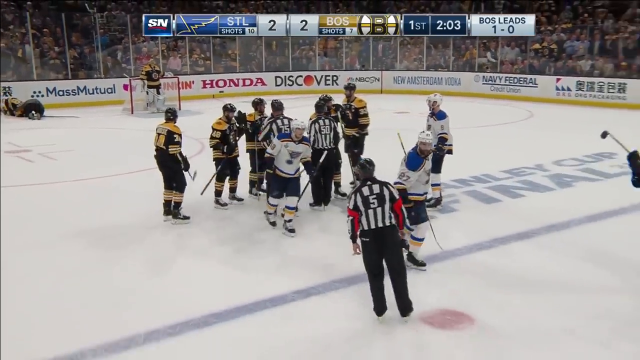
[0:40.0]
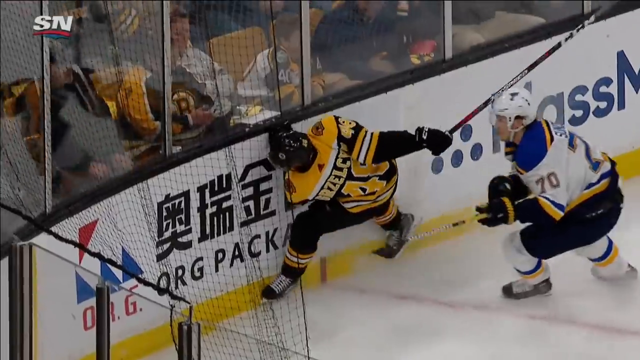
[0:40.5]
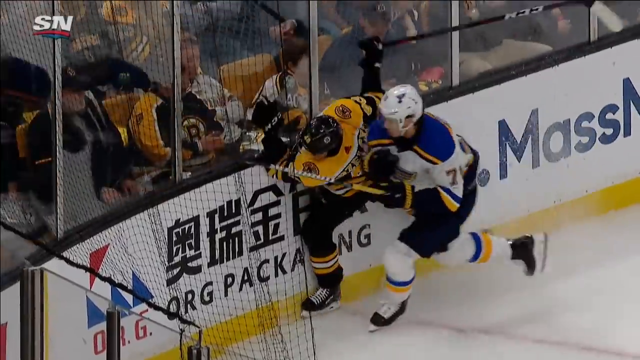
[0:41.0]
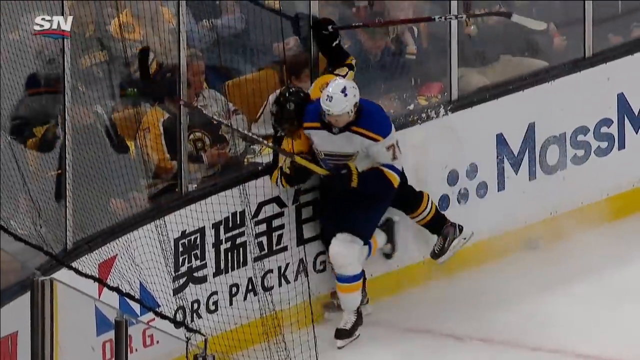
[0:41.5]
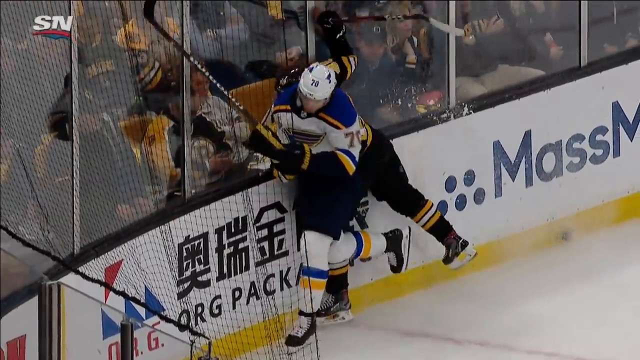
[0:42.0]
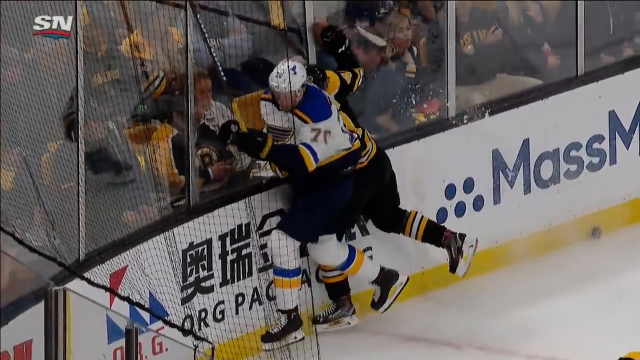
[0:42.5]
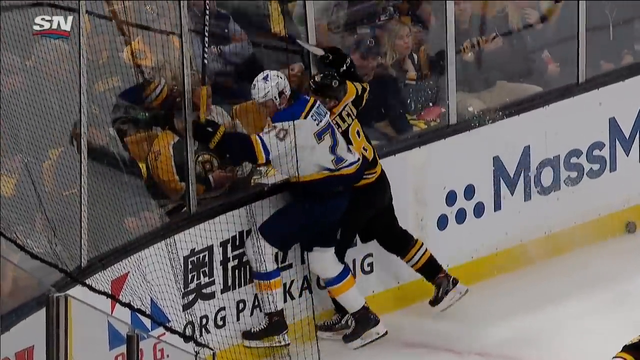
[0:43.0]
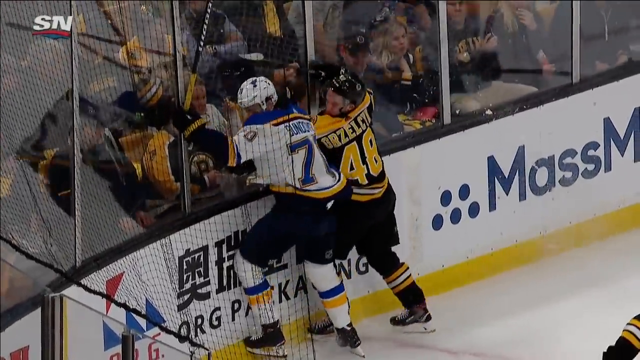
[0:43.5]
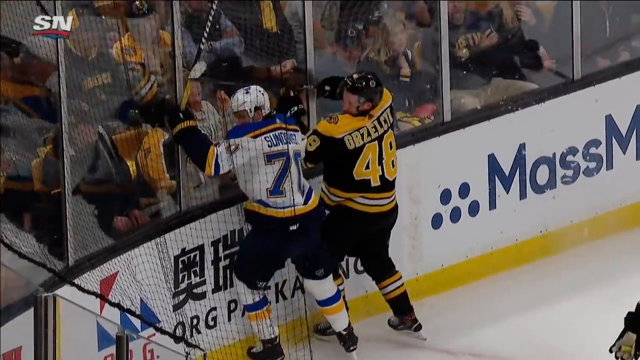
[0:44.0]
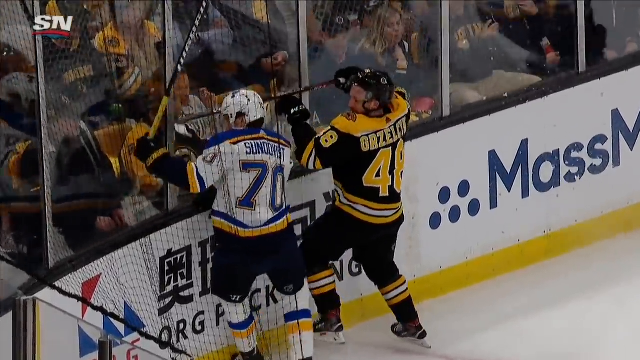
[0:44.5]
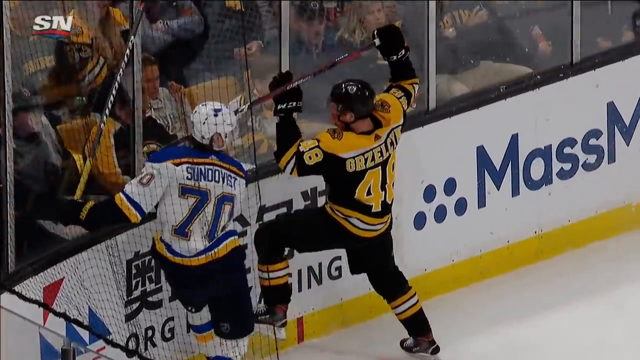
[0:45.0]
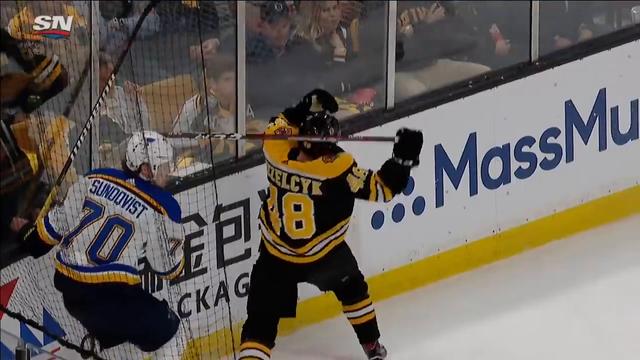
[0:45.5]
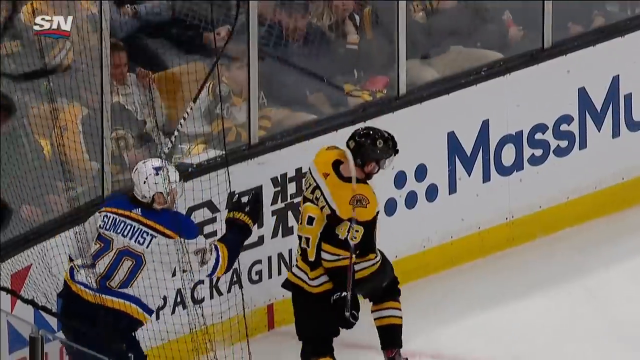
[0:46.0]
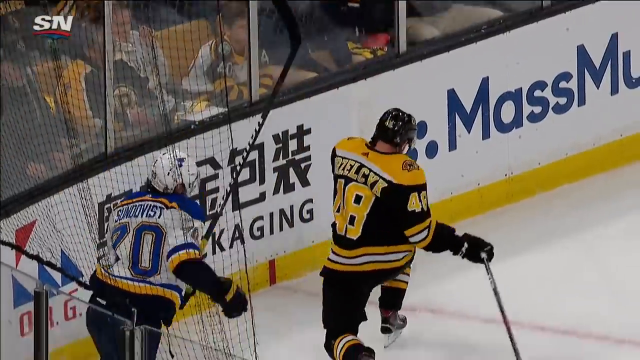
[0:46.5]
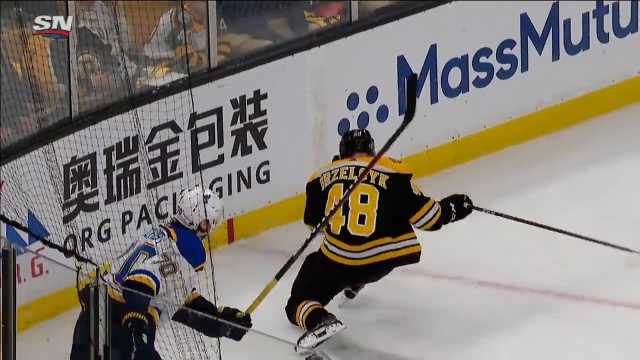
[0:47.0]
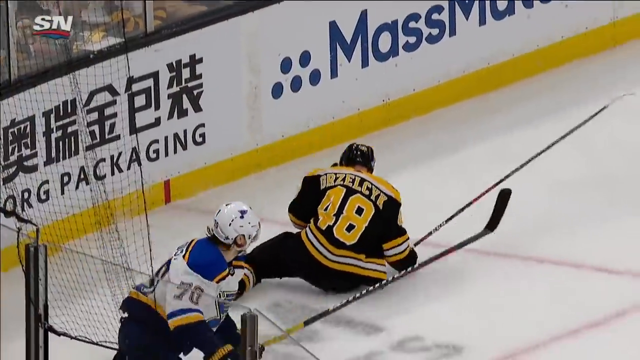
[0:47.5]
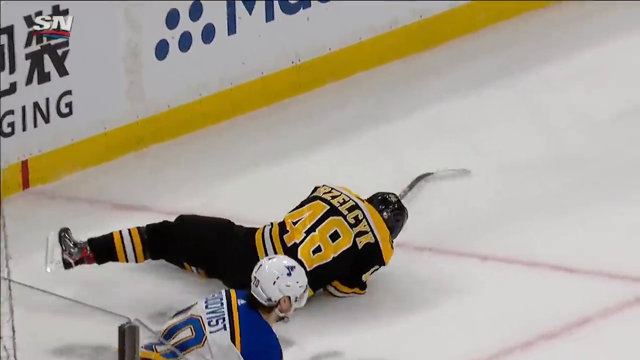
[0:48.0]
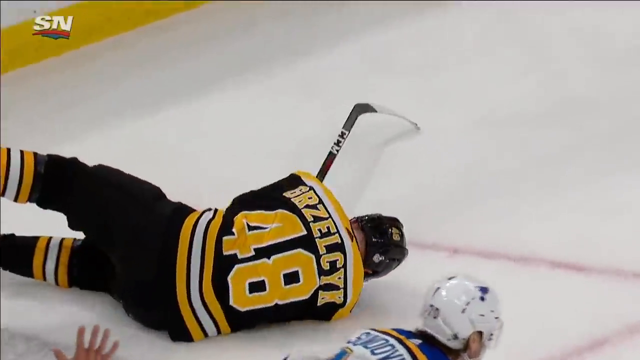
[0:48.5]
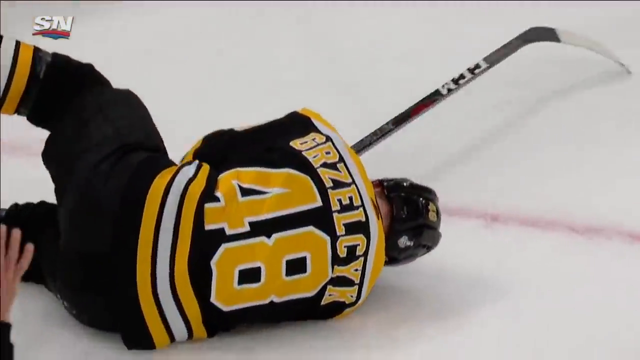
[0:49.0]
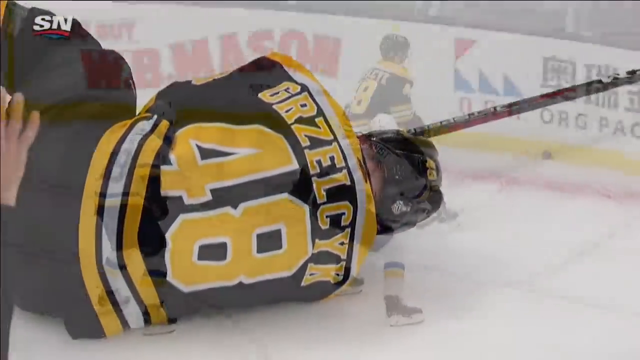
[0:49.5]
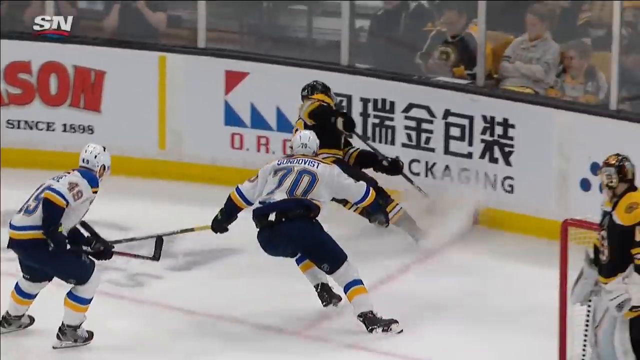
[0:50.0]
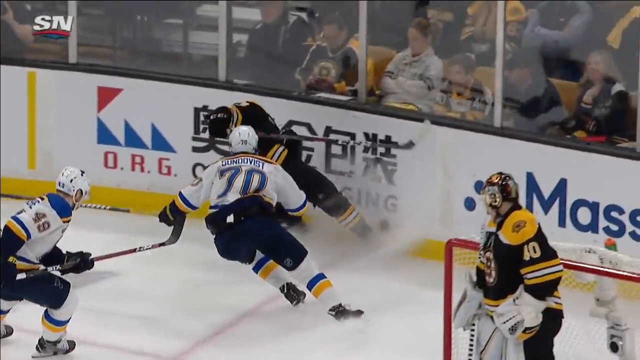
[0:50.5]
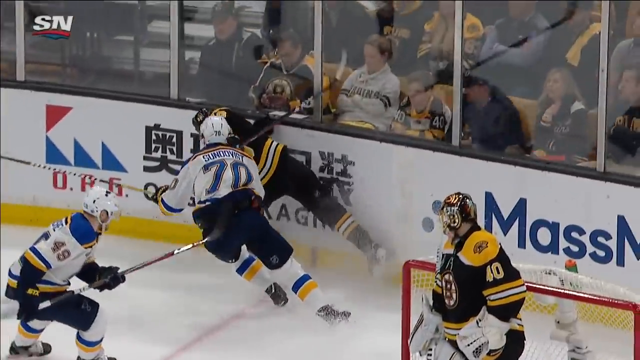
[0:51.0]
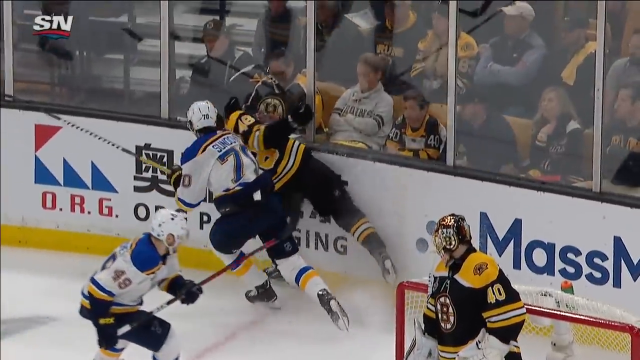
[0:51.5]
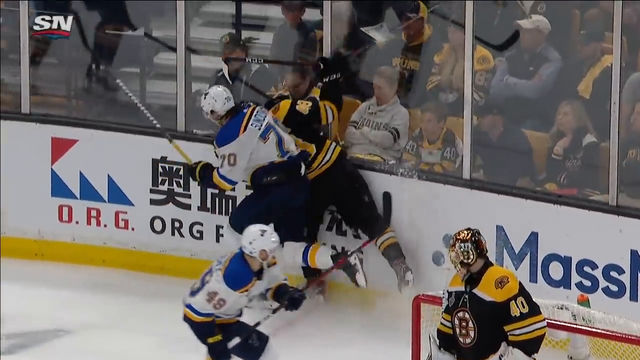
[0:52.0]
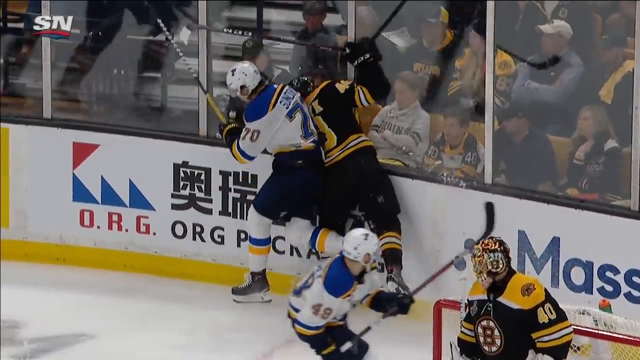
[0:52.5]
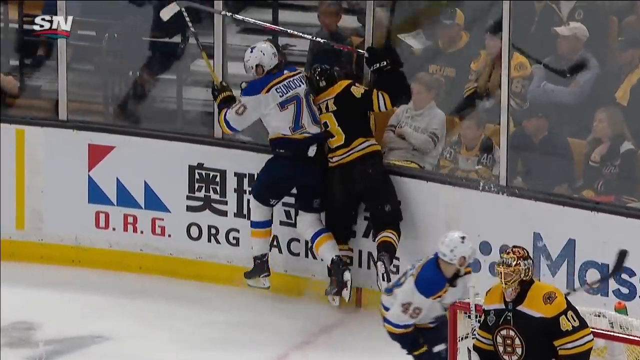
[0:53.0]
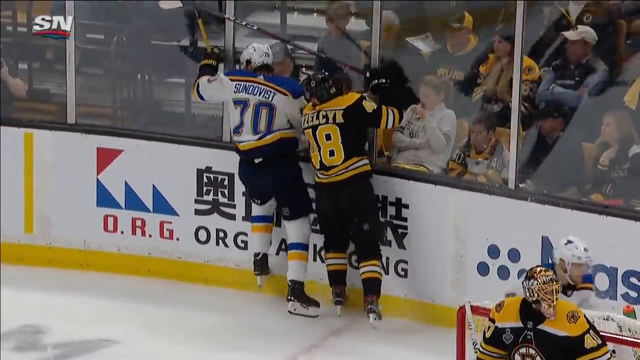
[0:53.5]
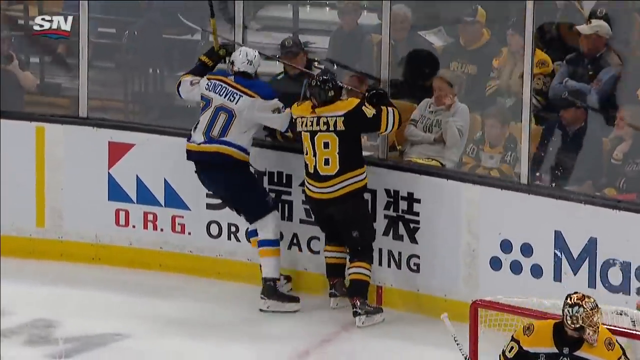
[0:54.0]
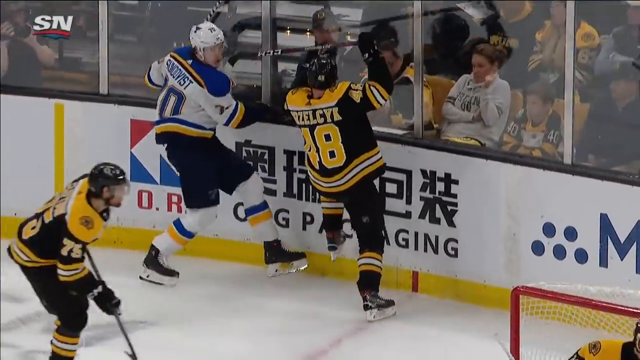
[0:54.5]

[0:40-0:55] A slow-motion replay shows a player in a yellow and black outfit running straight into the wall of the hockey rink, looking very painful. Another player in a white and blue outfit runs into him, pushing him further into the wall, both of them going into the wall in slow motion. The player in black and yellow falls over and appears to be in pain on the ground; he is seen only from behind, so his face is not visible. Another angle of the same moment follows, from more to the right of the players and a bit behind them, again showing the players running together and the player in white almost squishing the other against the wall. The wall is white with sponsors, topped by panels of what seems to be glass, with people visible behind it.